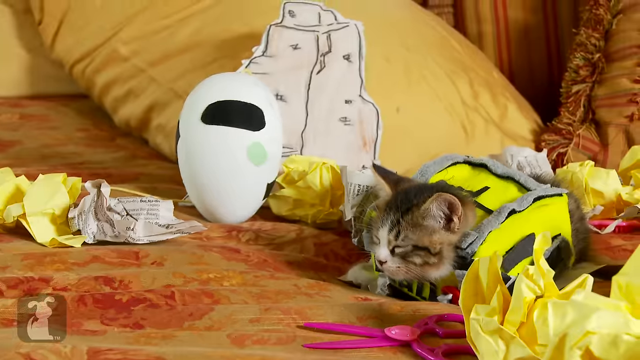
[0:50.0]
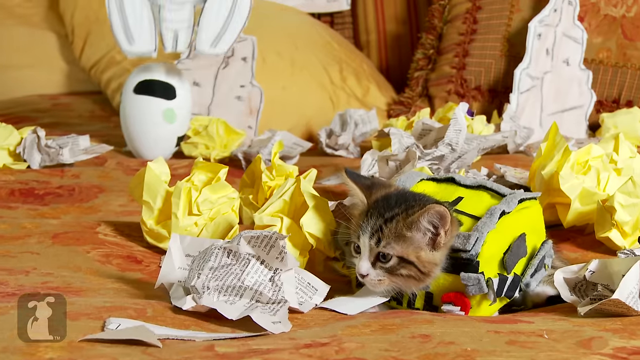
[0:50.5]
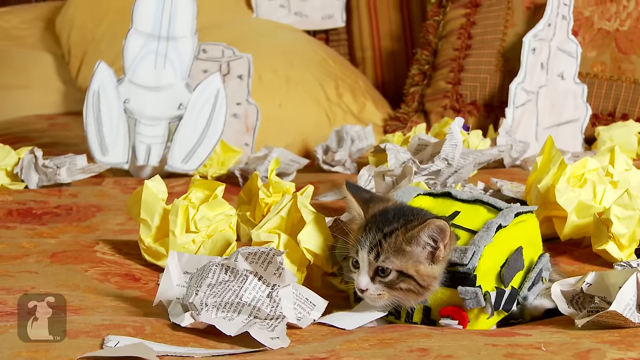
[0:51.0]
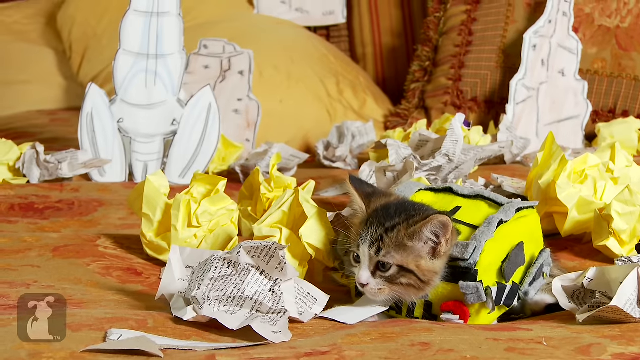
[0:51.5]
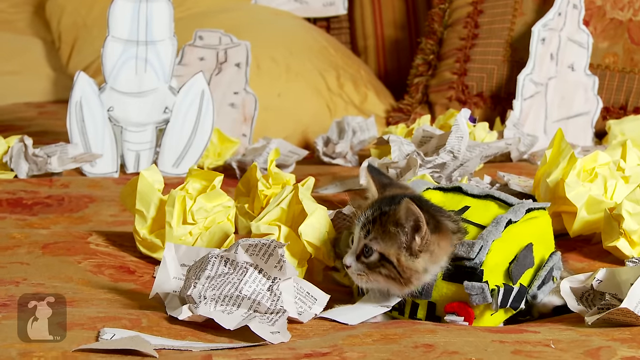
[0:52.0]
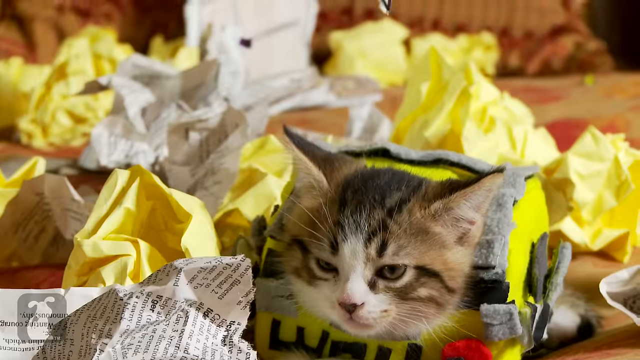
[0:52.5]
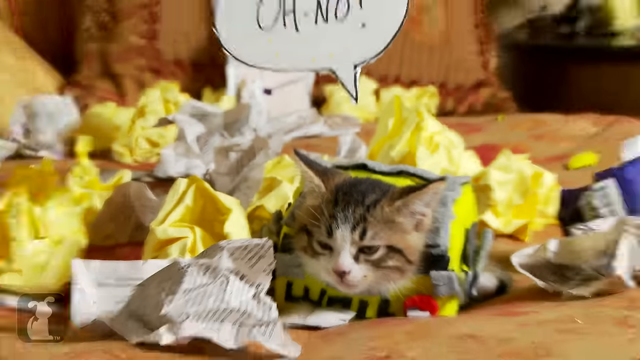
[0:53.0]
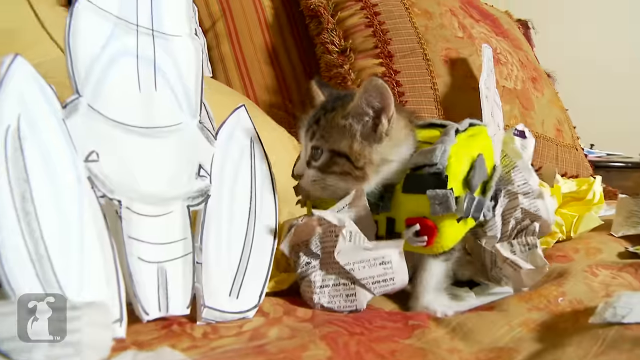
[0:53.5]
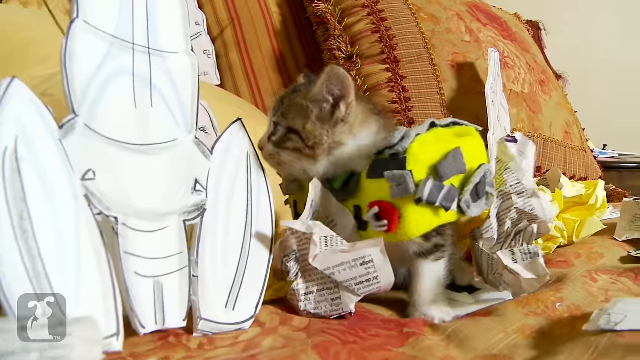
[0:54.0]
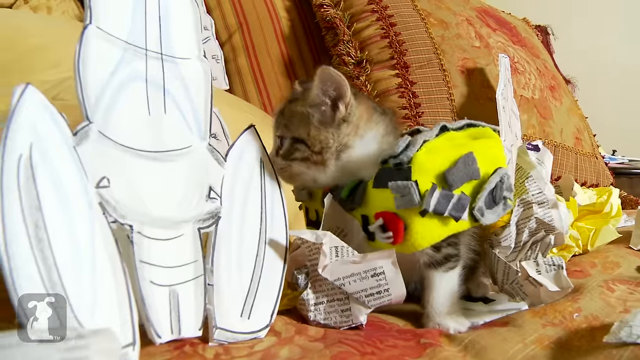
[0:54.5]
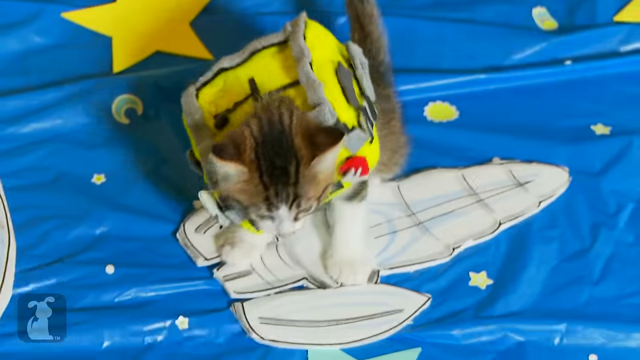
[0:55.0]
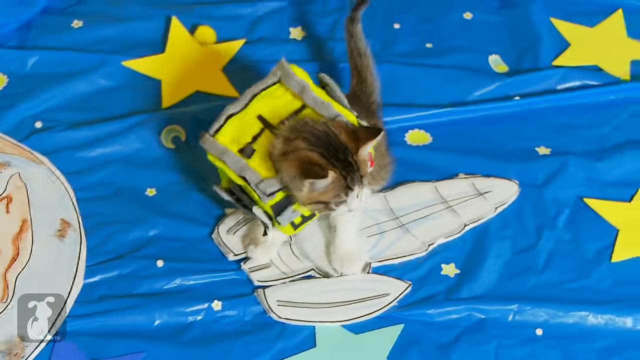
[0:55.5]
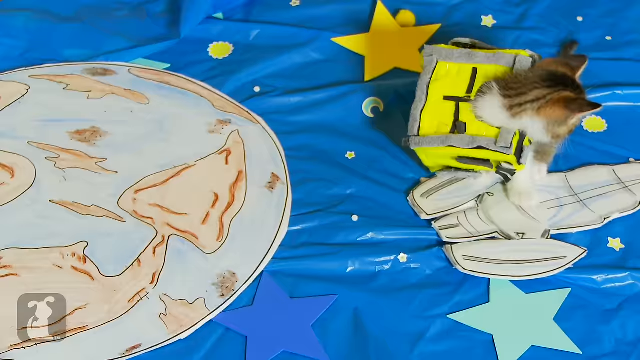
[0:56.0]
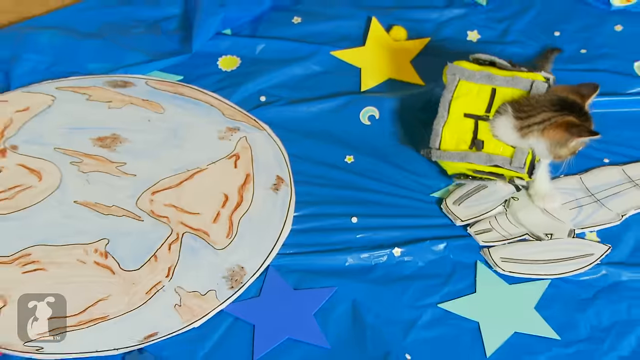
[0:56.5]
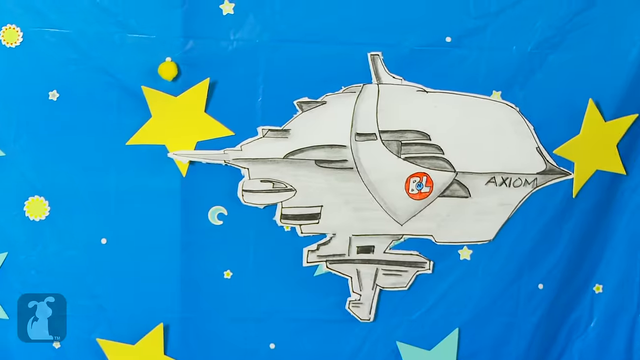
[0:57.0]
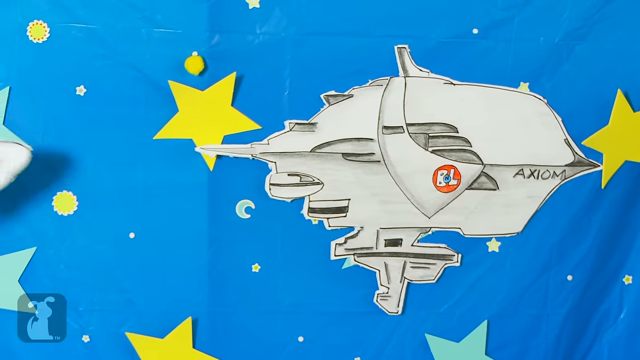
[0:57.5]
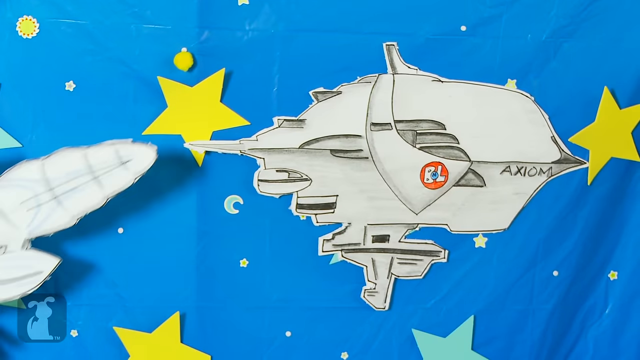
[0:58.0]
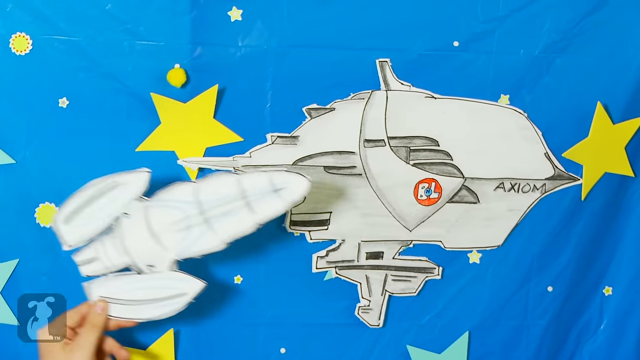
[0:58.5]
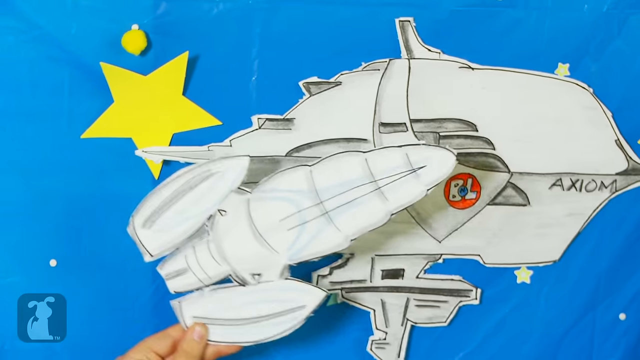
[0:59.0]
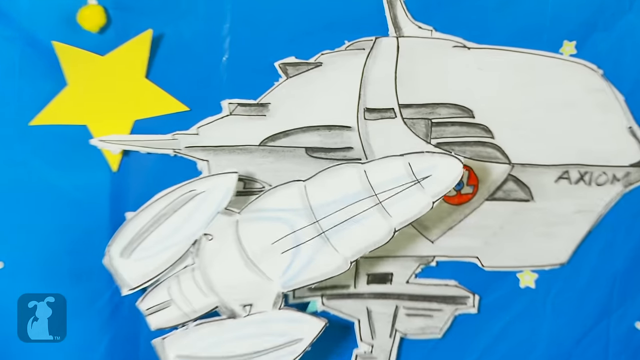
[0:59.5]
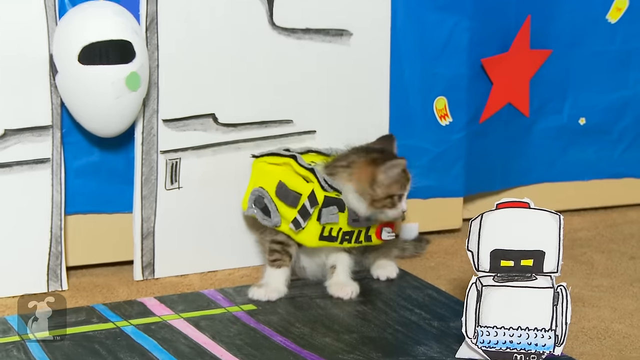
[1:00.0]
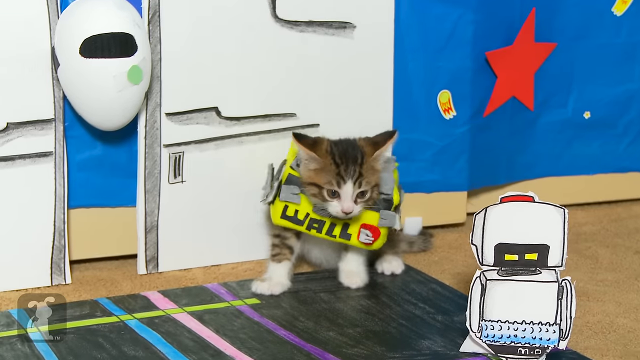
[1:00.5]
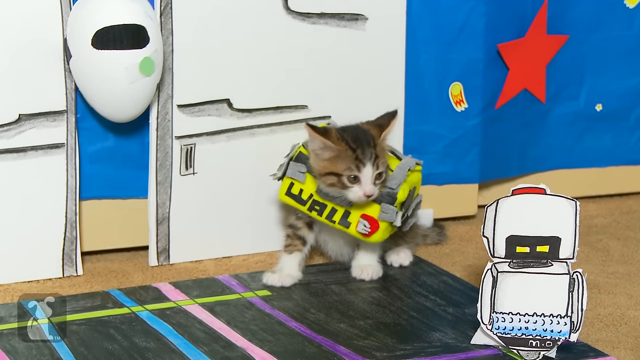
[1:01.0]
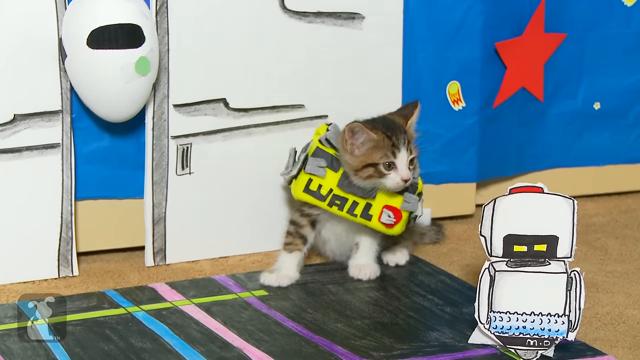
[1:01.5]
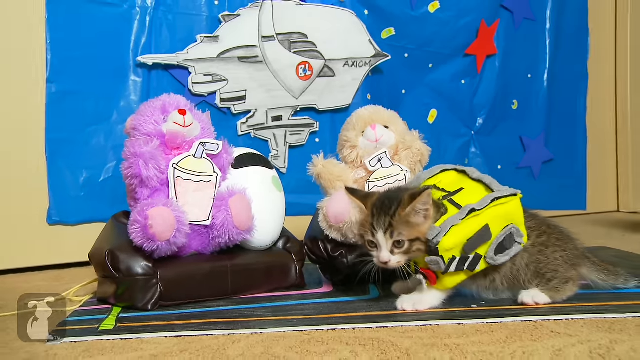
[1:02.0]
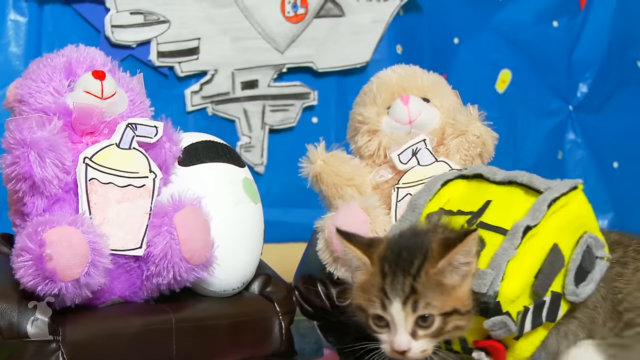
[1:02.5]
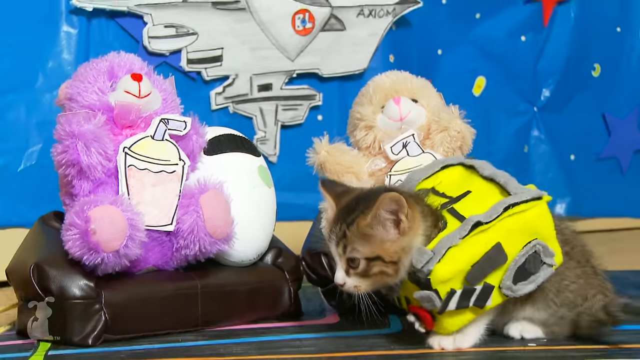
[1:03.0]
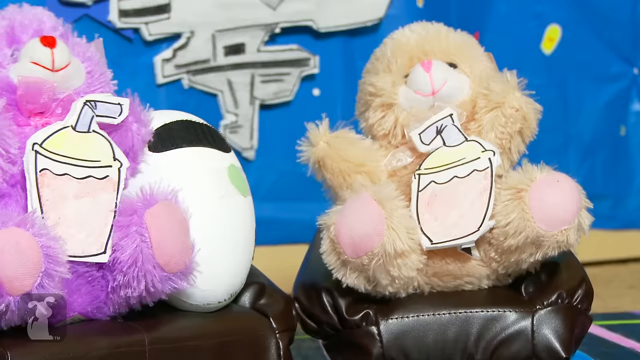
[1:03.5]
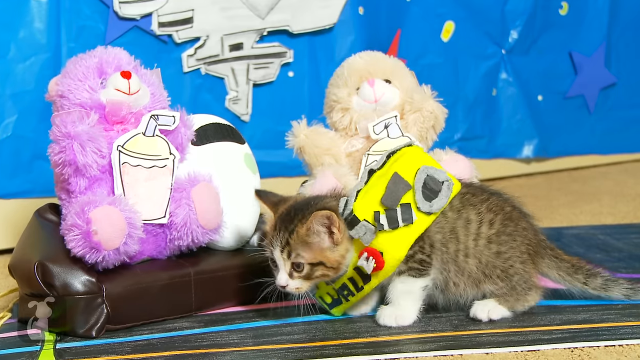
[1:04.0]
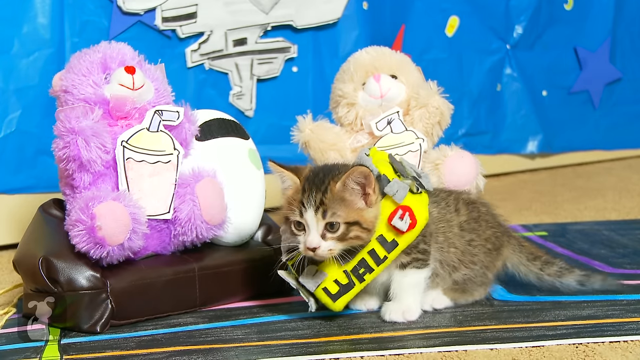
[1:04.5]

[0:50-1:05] A drawing of a spaceship descends from the top of the screen to the bottom. The cat looks around, a bit puzzled but not scared. A drawn speech bubble appears above the cat saying "oh no". The cat then investigates the drawing of the rocket that appeared and seems to mount it, and the rocket goes to an even bigger spaceship. Inside, the cat finds two sheep, each with a drink, which seem to be sitting on a chair. One of the sheep is brown and the other is purple.